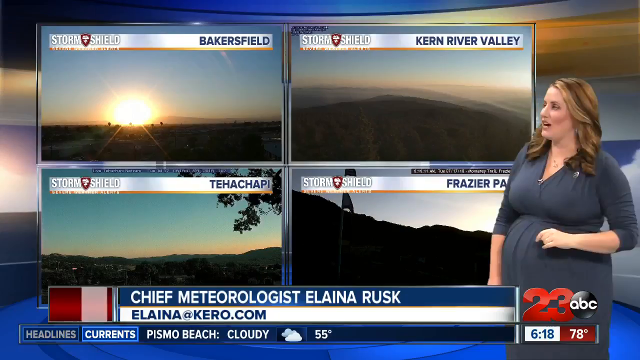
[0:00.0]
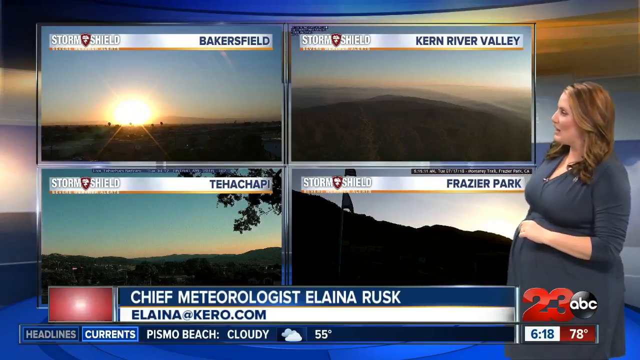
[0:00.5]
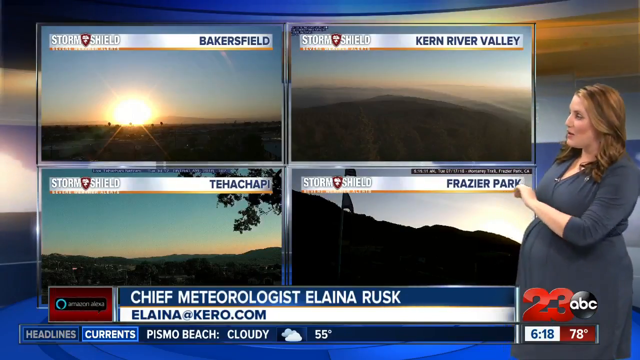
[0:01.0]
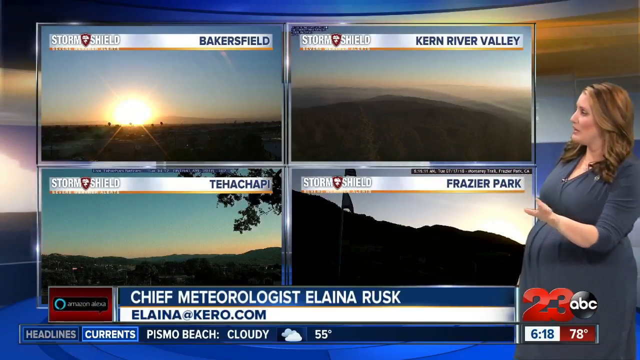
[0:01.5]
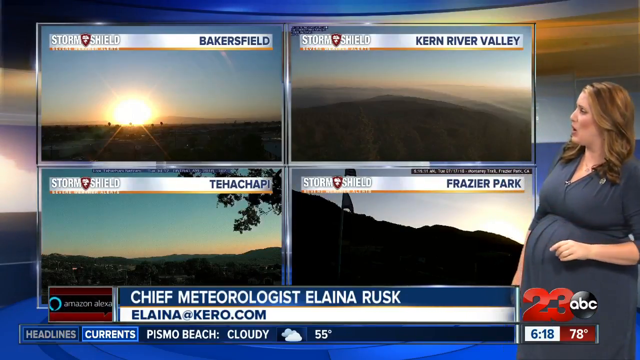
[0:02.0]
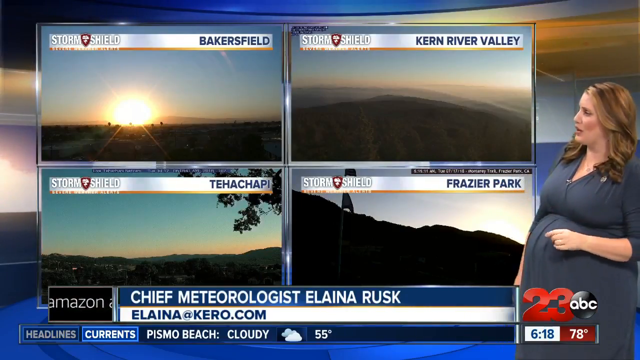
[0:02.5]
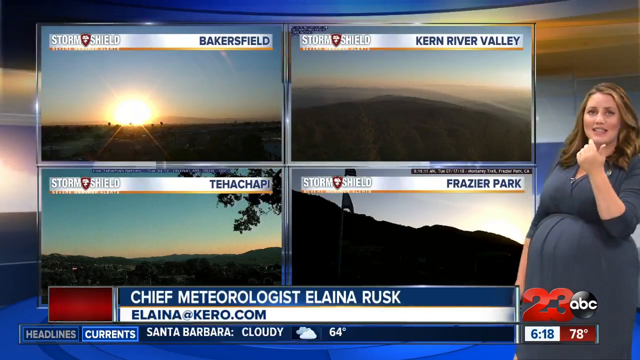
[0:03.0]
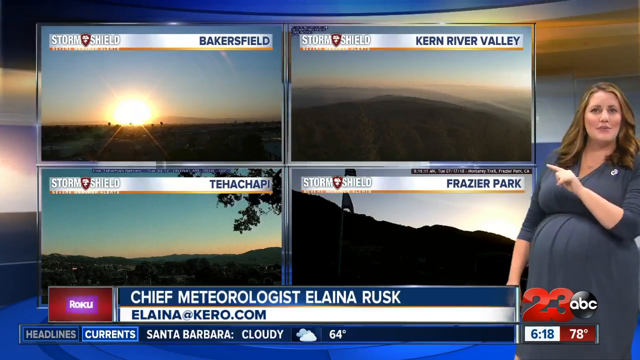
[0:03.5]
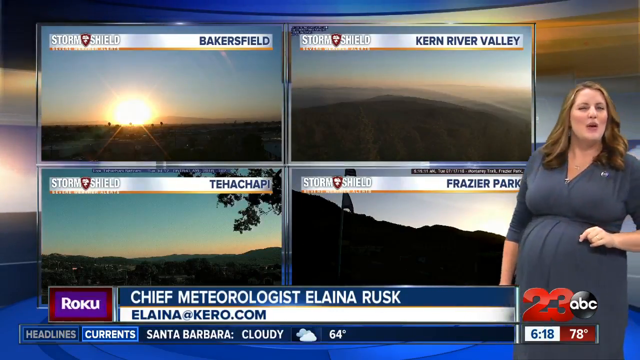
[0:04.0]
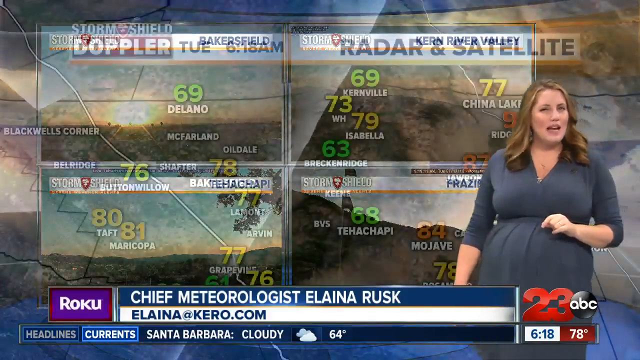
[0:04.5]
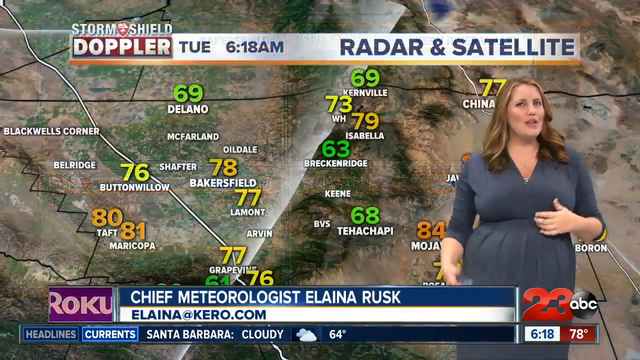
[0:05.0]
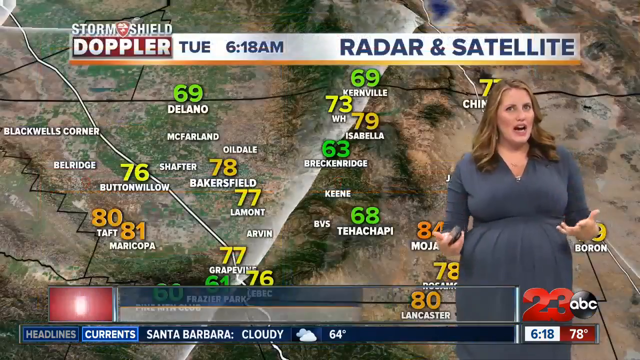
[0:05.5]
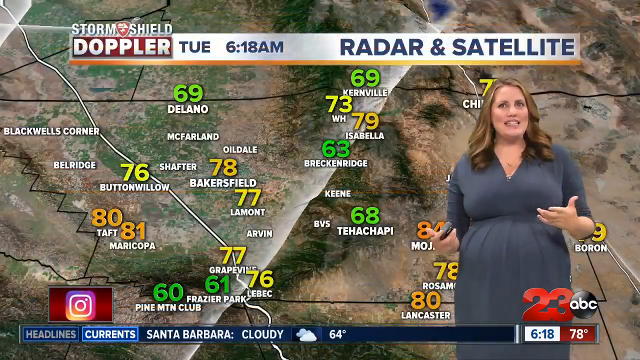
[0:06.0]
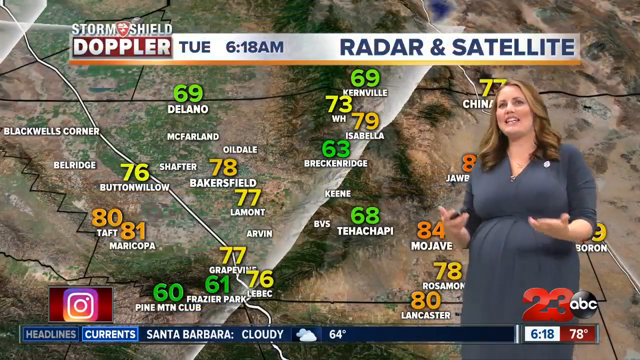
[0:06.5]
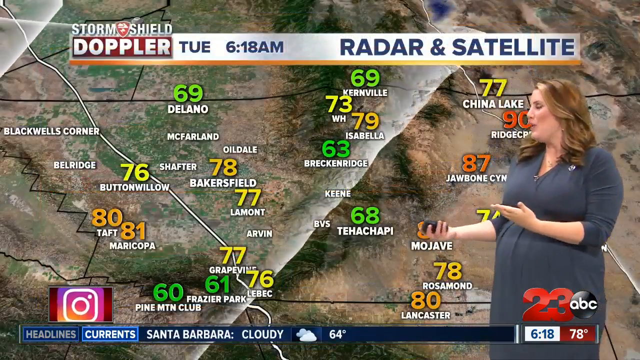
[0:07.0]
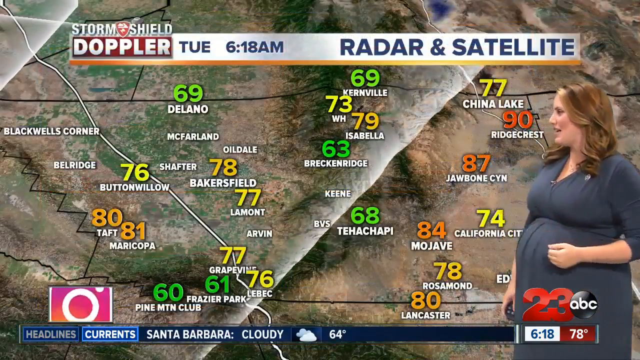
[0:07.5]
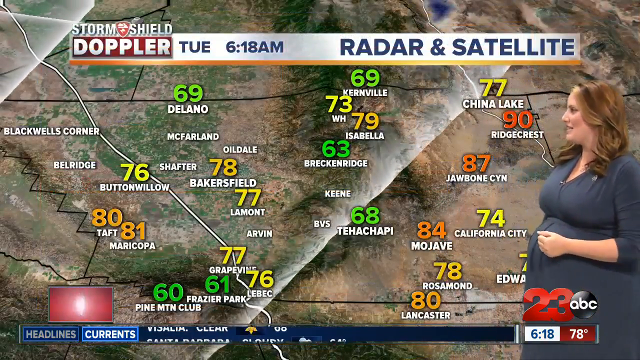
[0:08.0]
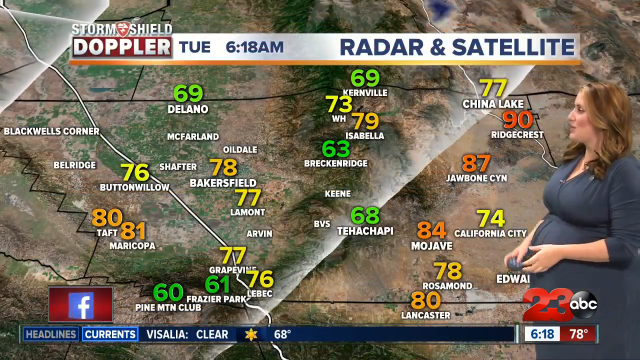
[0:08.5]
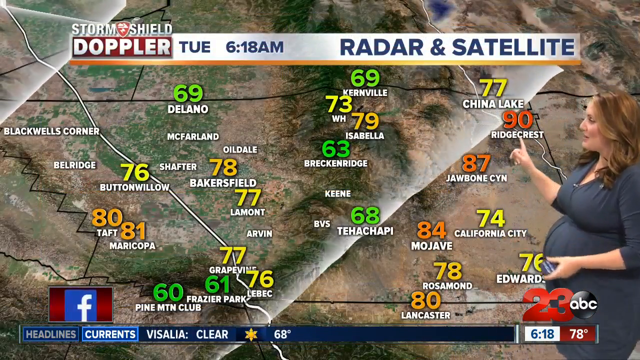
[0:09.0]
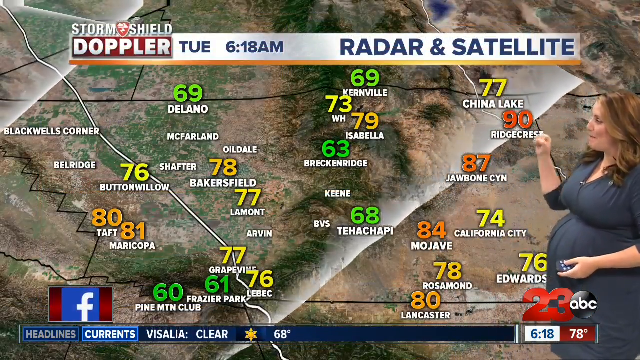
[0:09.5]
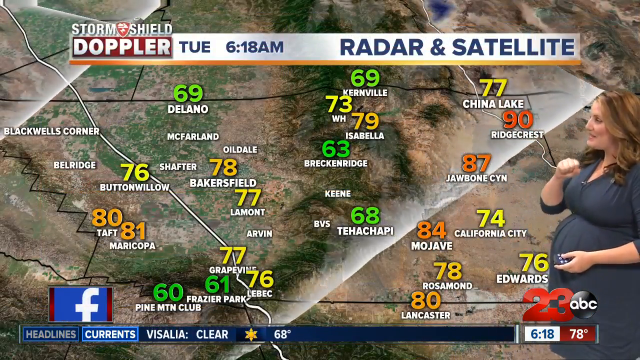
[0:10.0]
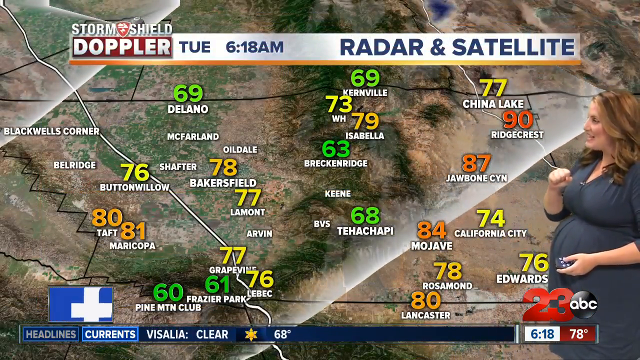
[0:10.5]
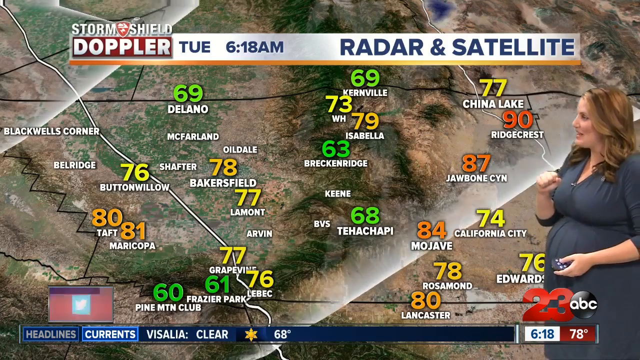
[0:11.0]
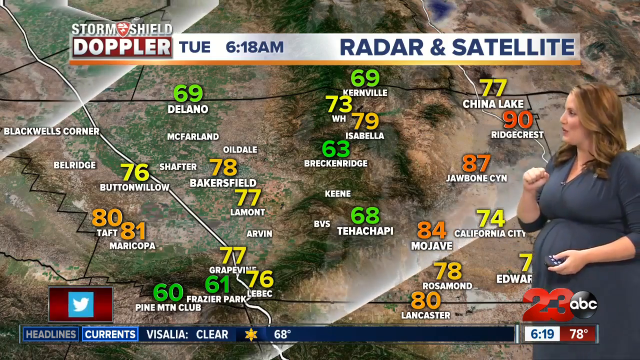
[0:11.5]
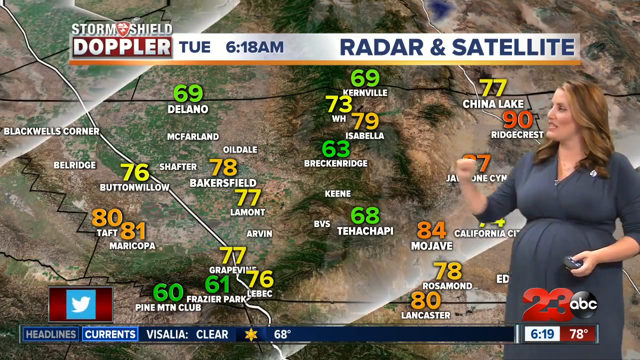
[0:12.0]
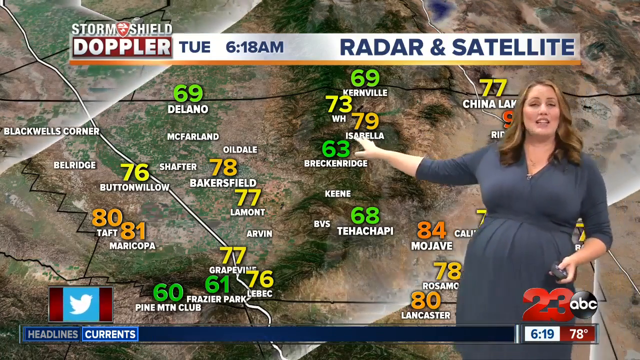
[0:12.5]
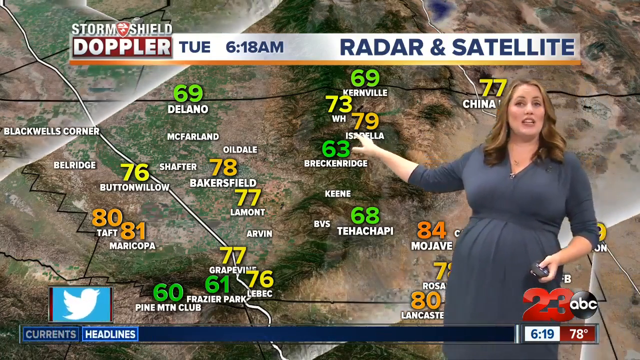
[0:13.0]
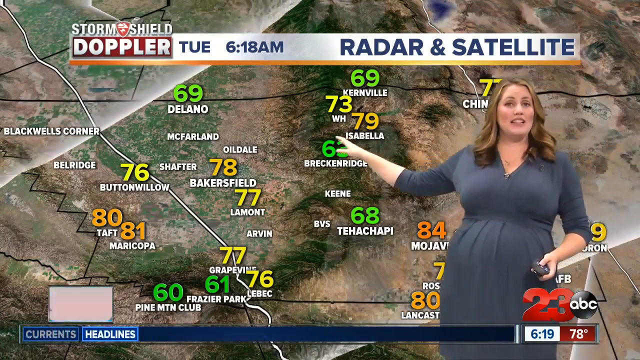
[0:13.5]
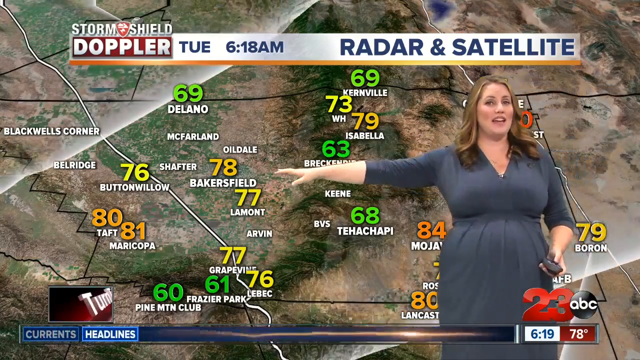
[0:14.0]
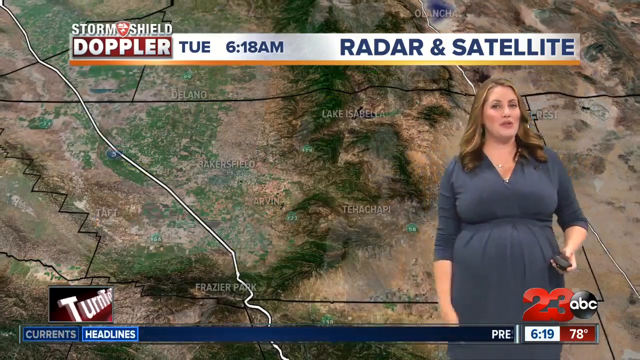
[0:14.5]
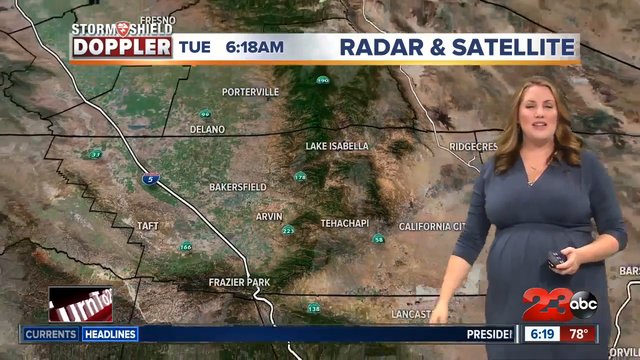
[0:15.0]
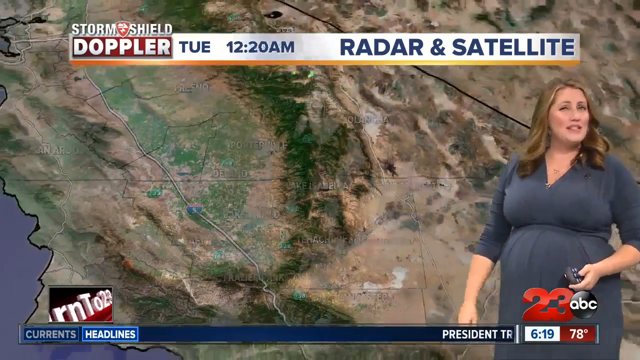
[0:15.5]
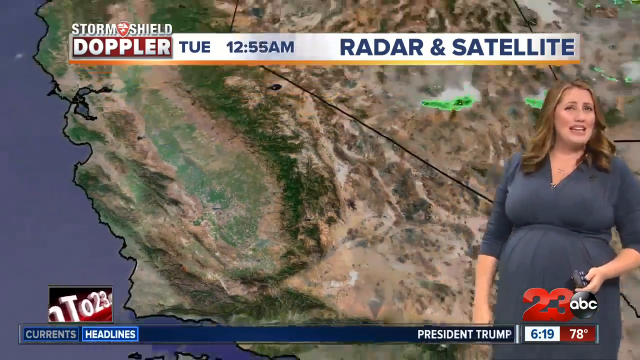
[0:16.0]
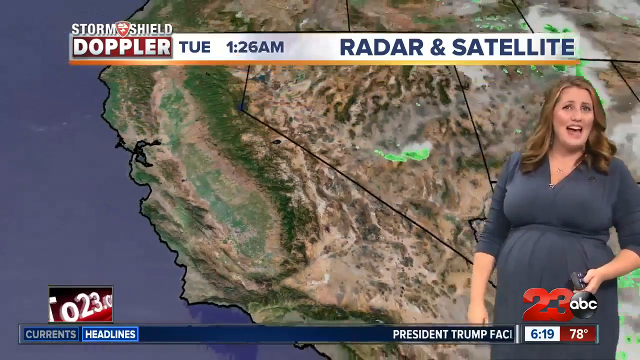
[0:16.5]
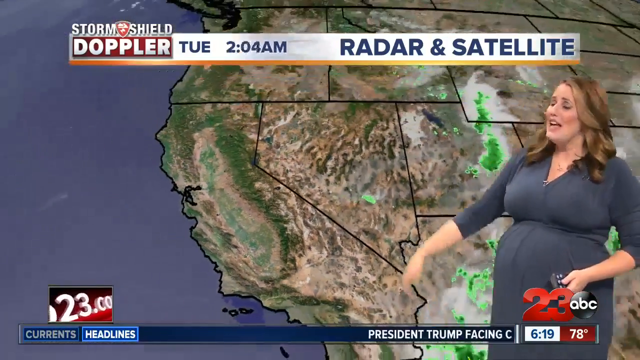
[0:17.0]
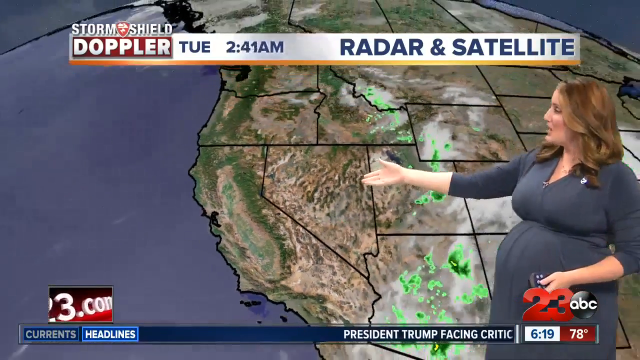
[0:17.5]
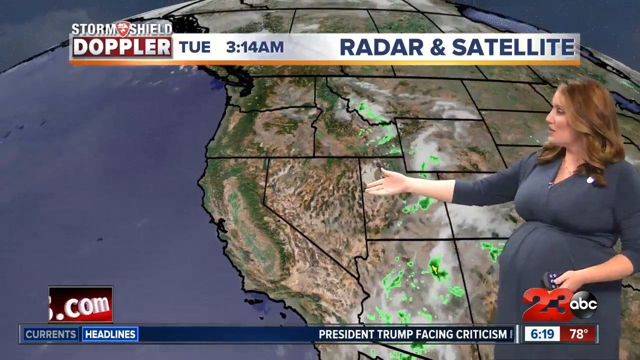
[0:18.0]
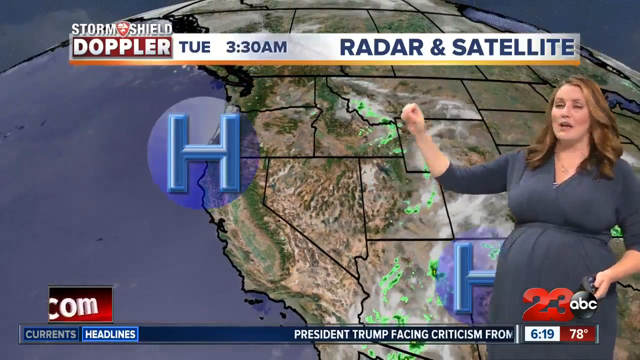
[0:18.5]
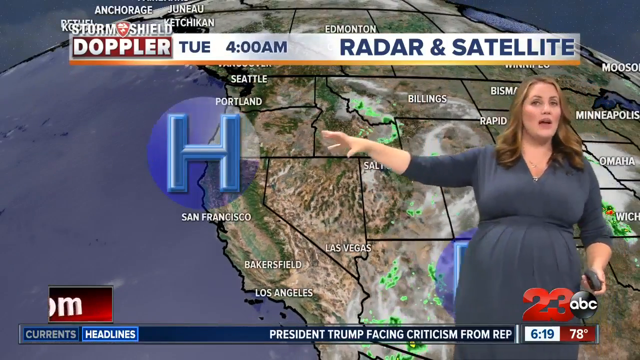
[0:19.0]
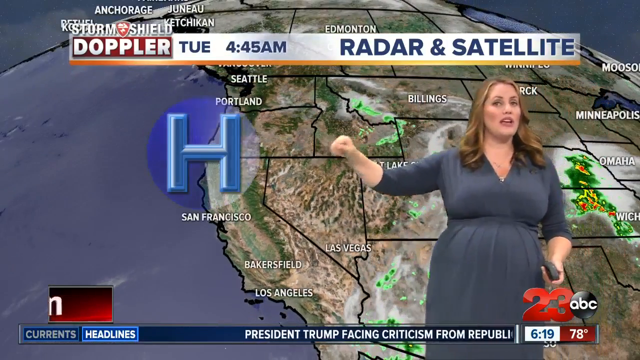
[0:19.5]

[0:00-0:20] An on-screen graphic identifies chief meteorologist Elena Rusk, with the email "elena.carrow.com". Storm Shield graphics show Bakersfield, Kern River Valley, Tehchapi and Fraser Park. The channel is 23 ABC, and the screen shows 6 p.m. and 78 degrees. A "Storm Shield Doppler" map reads "Tuesday 6:18 a.m." and "Radar and Satellite View", with town temperatures including 69 Delano, 69 Kernsville, 79 Isabella, 77 China, 63 Breckenbridge, McFarland, Oildale, 78 Bakersfield, Shafter, 76 Buttonwillow, Blackswell's Corner, Bellridge, 80 Taft, 81 Maricopa, 77 Grapevine, 77 Lamont, Arvin, Keane and Mojave. The broadcast is a 23 ABC news weather forecast marked live, with channel headlines and a current reading for Santa Barbara of cloudy and 64 degrees. The news reporter wears a blue dress and appears somewhat overweight. The radar and satellite view shows the progression of the storm and precipitation.